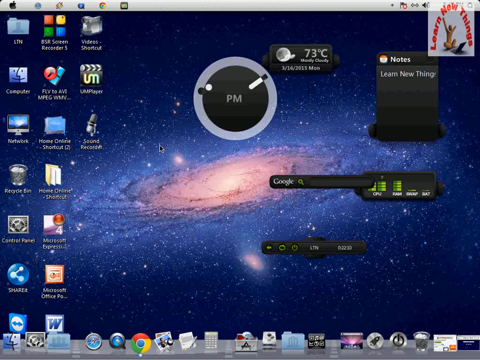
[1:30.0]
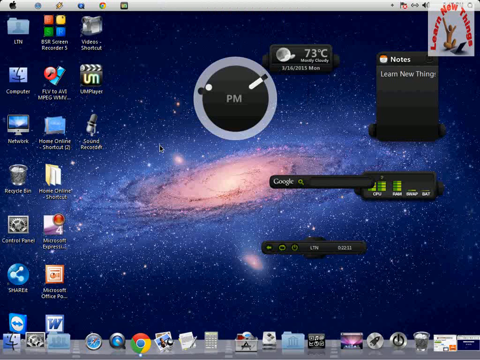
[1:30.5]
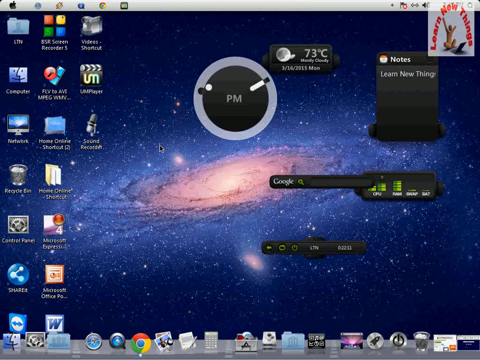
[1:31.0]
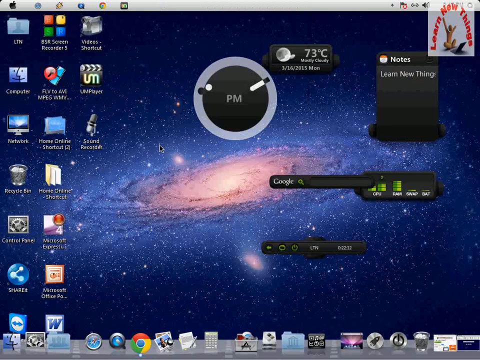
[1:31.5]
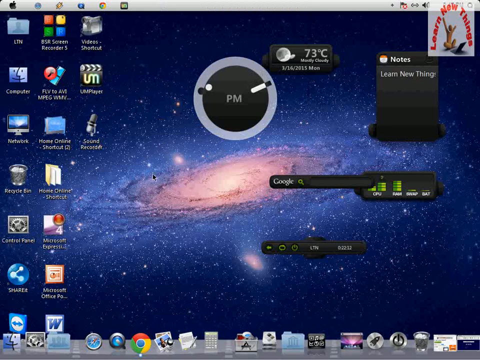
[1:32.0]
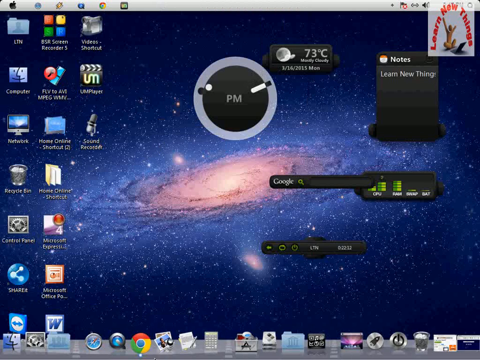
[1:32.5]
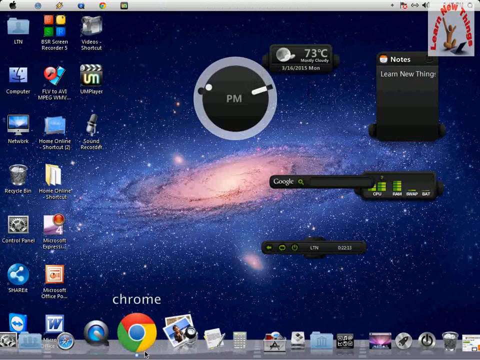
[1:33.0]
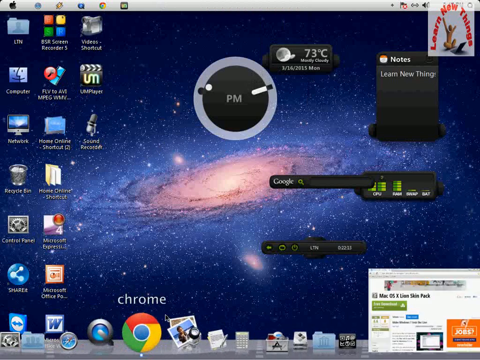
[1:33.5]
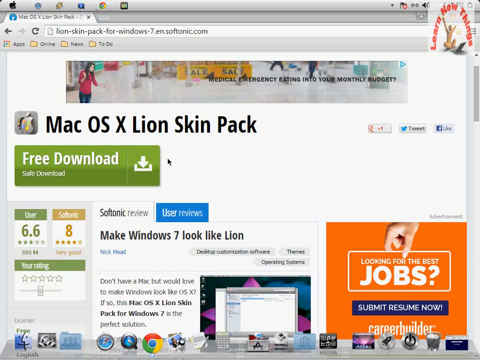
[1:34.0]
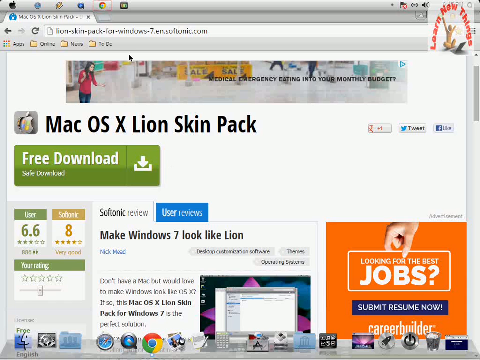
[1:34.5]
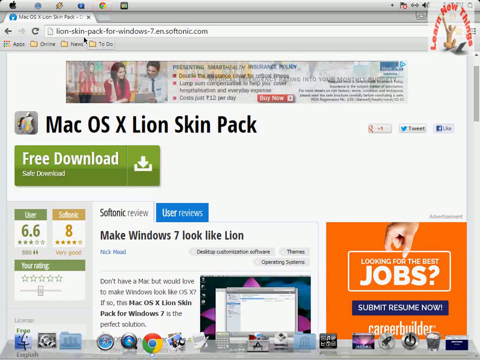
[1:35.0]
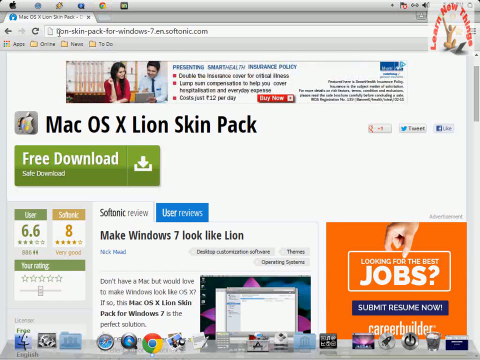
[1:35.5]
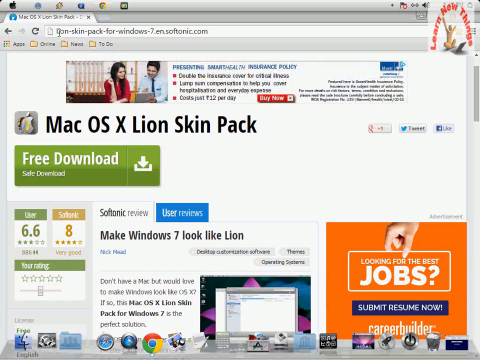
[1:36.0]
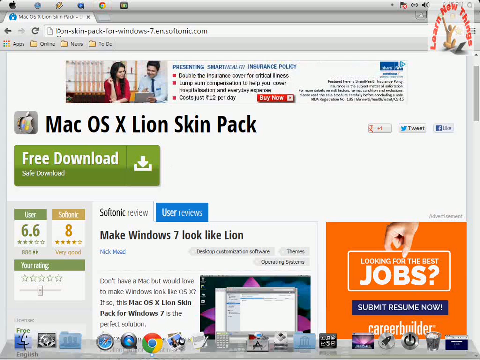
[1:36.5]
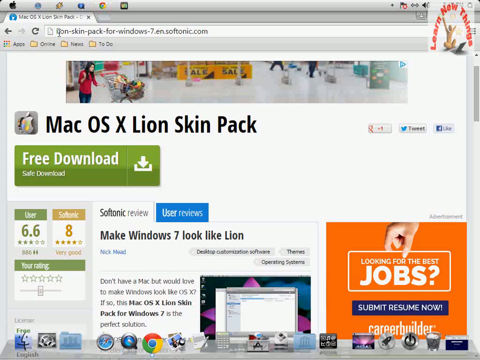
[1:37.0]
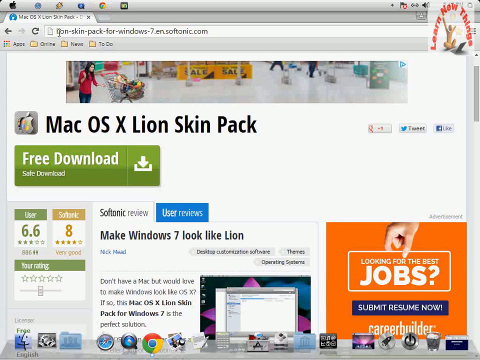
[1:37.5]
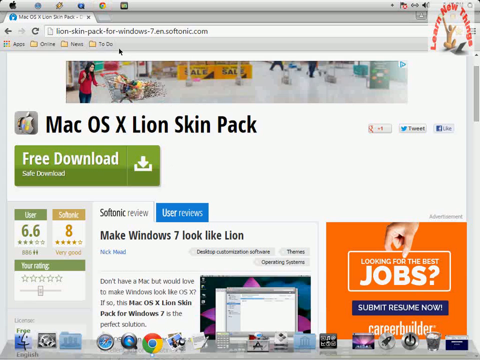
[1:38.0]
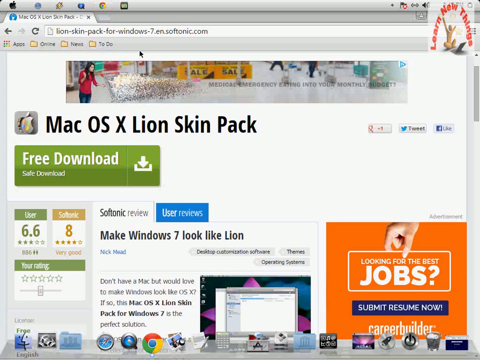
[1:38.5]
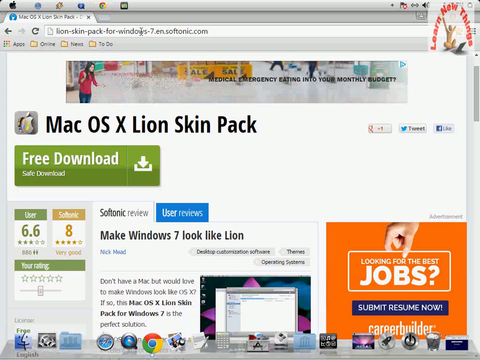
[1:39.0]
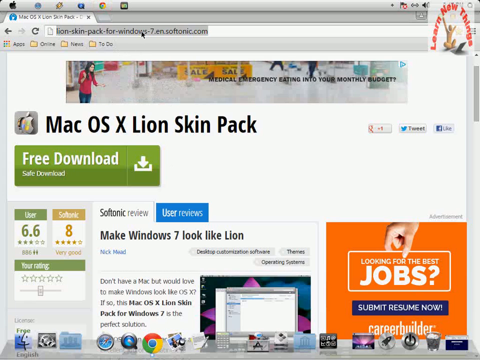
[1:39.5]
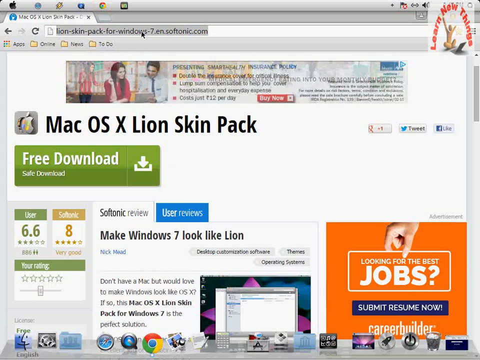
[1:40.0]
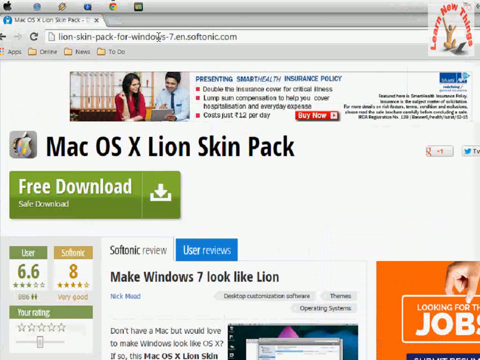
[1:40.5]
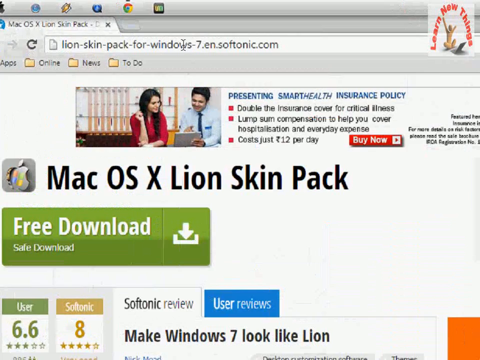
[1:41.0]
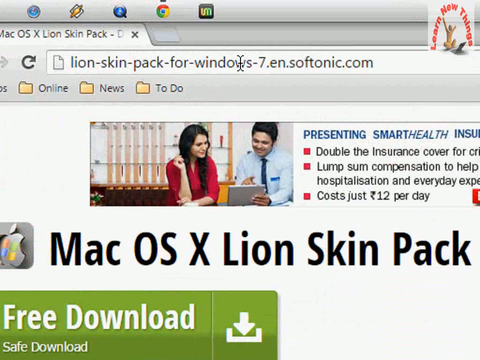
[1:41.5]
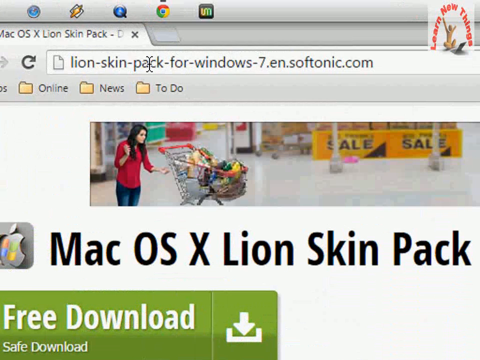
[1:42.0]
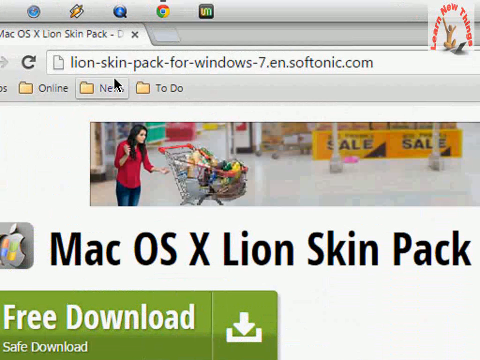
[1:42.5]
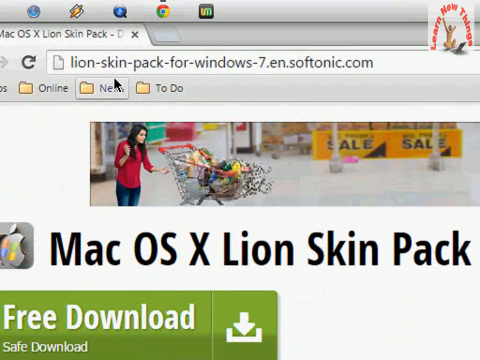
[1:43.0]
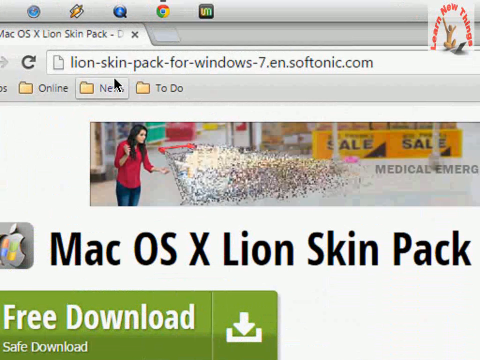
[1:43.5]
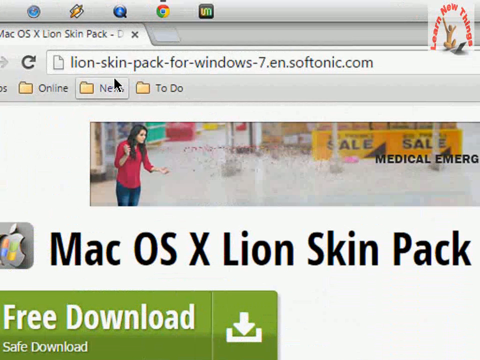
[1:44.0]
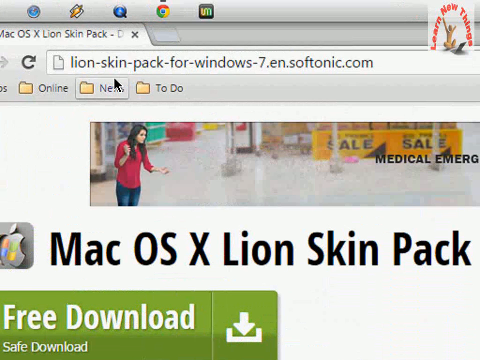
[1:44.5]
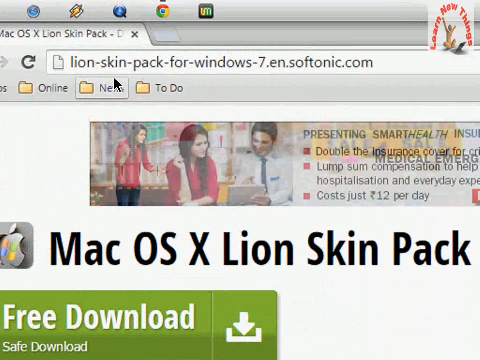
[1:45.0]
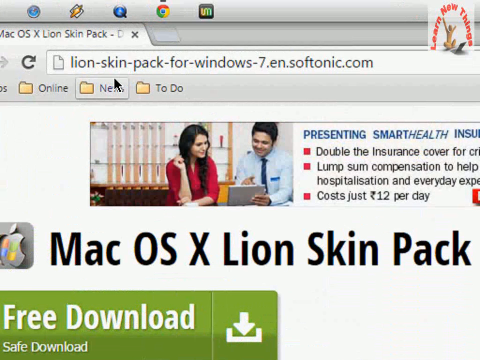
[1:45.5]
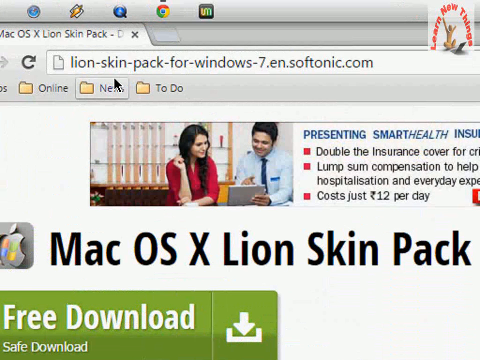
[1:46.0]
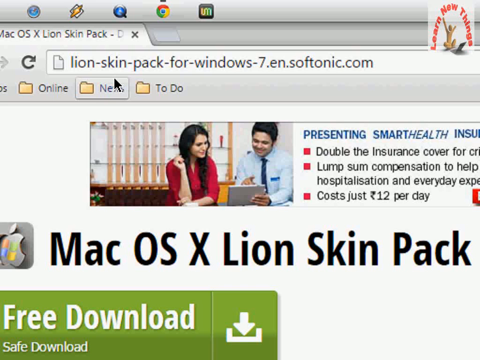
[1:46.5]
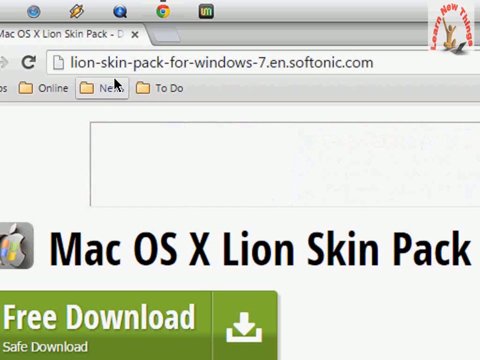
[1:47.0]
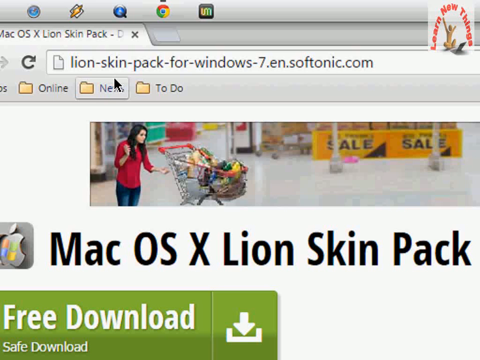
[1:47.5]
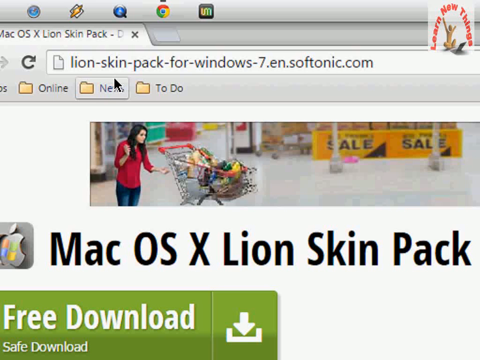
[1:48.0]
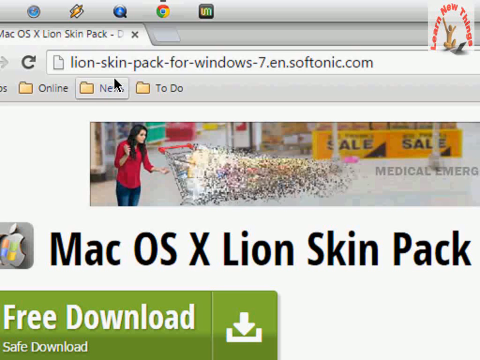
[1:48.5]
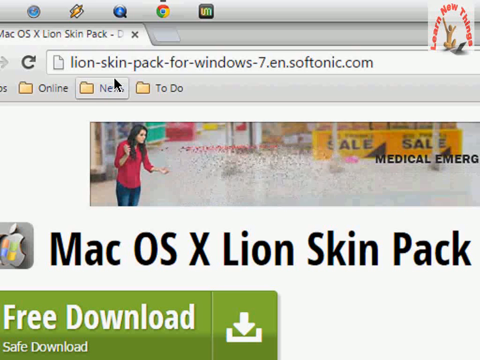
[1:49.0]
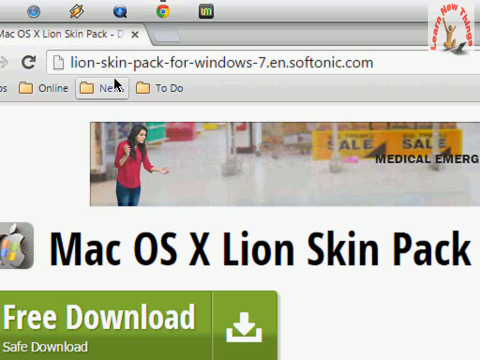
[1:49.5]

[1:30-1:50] The mouse pointer is on the left side, diagonal from the clock that was moved to the center; the pointer is black or white outline. The person moves across the bottom of the screen and appears to click on maybe the internet, moving very fast. A page shows "Mac OS", "X", "Lion Skin Pack", and below that a green rectangle with "free download", maybe "sale", and "download". It also says "make Windows 7 look like Lion". The person enlarges the browser window, which shows "Lion-Skin-Pack-4-Windows-7.en.softonic". Afterward it goes back to the wallpaper, which looks like a galaxy: dark blue at the edges, growing lighter toward the center, where there is a very bright circle.